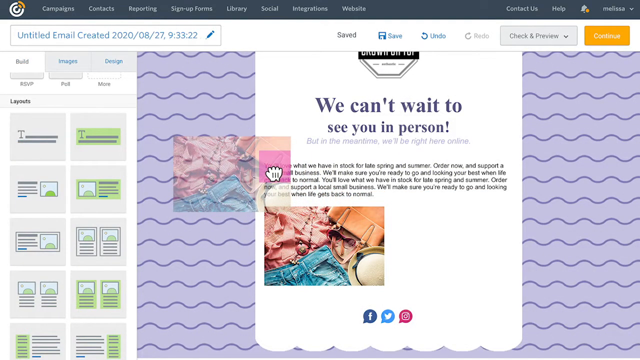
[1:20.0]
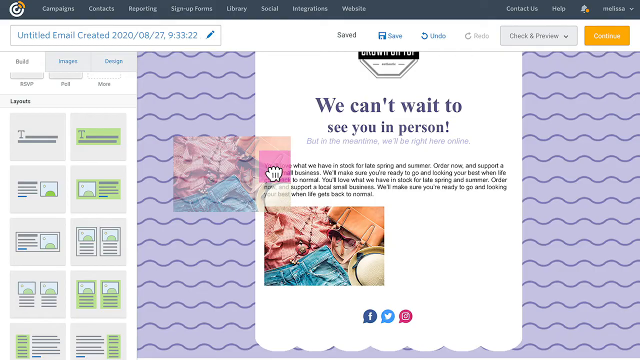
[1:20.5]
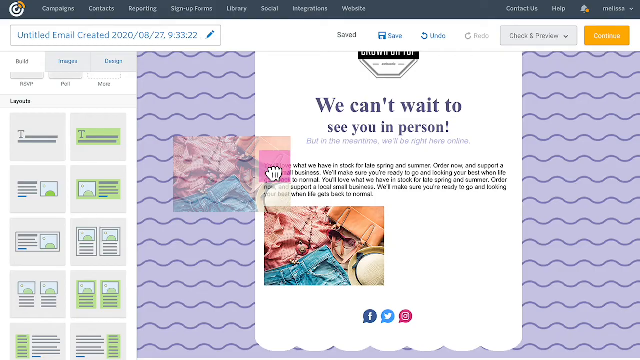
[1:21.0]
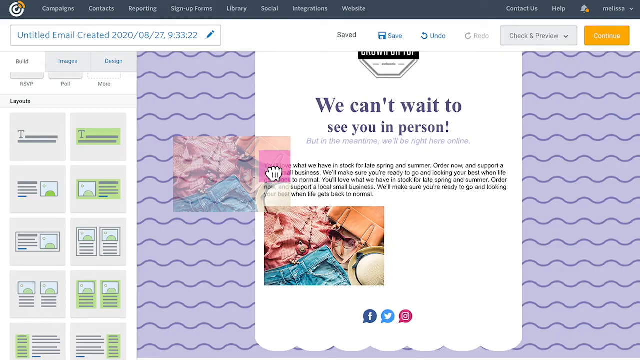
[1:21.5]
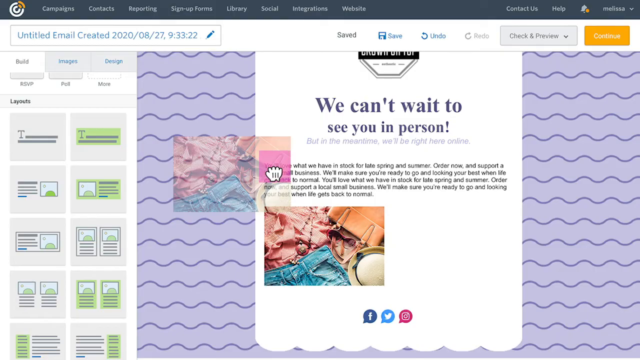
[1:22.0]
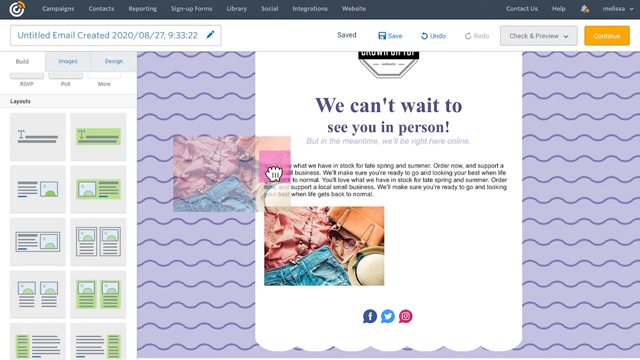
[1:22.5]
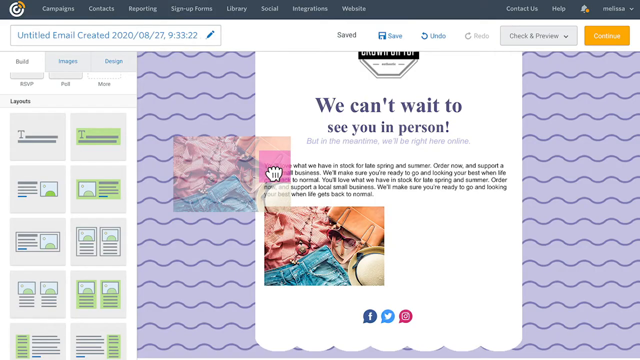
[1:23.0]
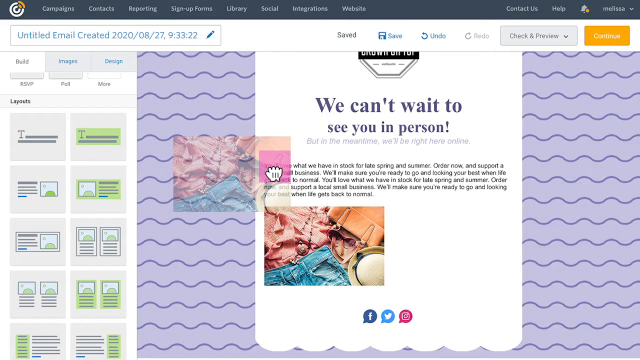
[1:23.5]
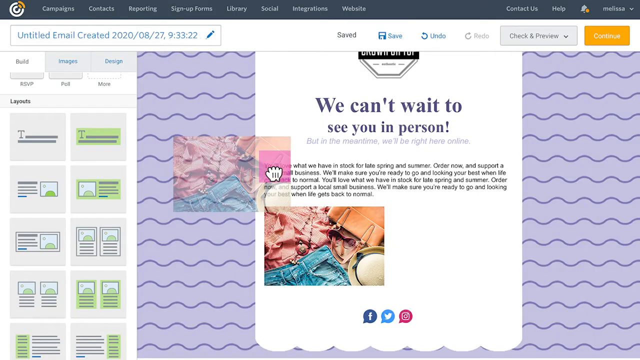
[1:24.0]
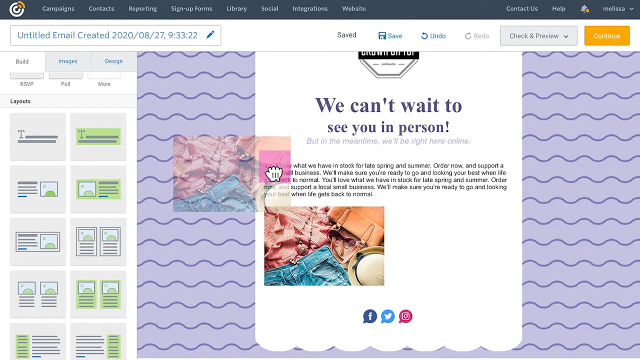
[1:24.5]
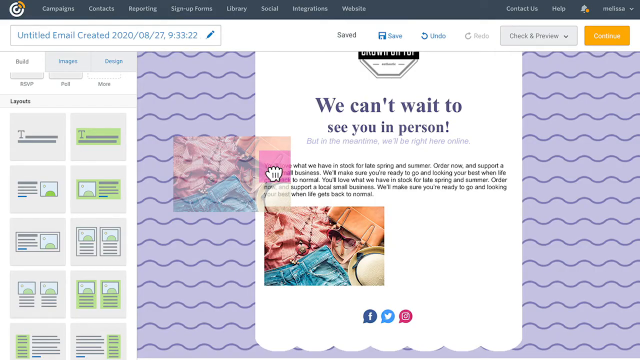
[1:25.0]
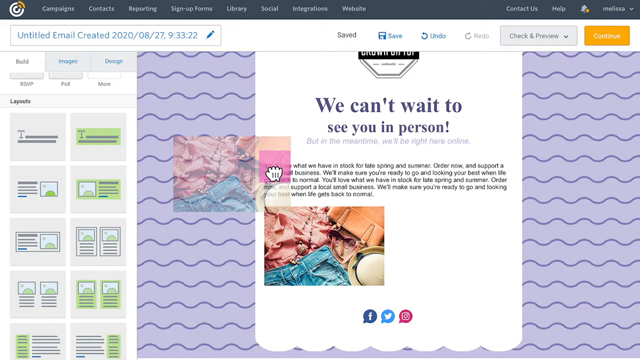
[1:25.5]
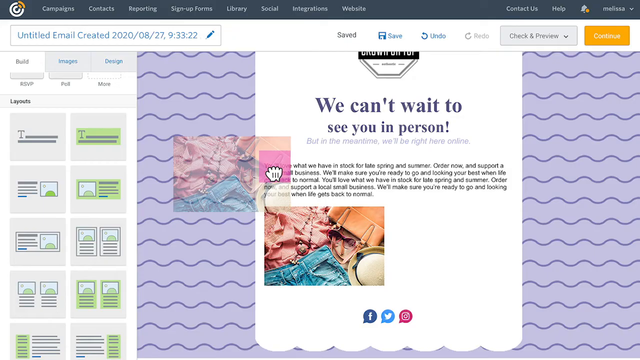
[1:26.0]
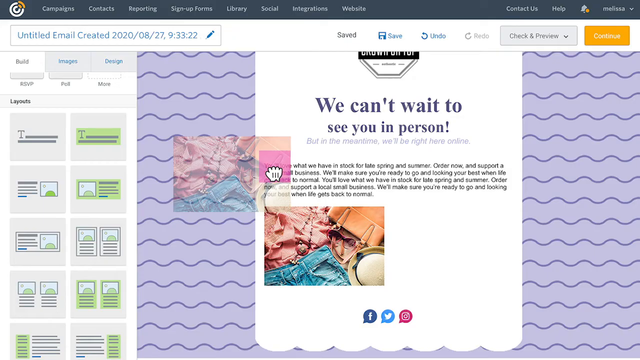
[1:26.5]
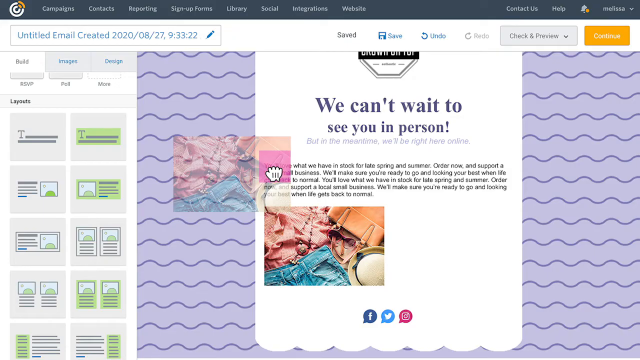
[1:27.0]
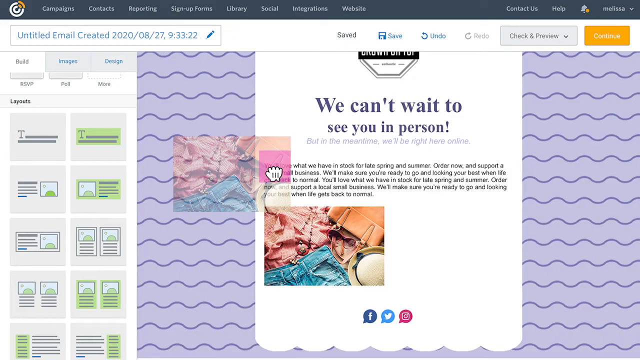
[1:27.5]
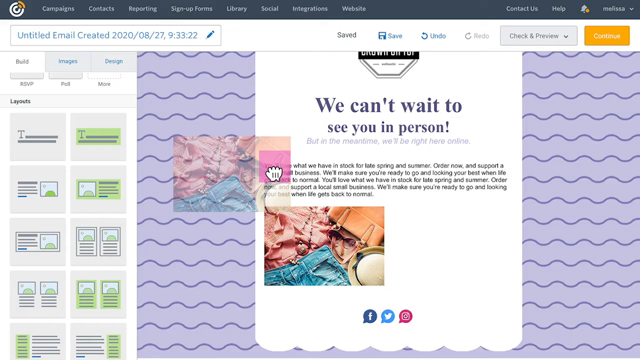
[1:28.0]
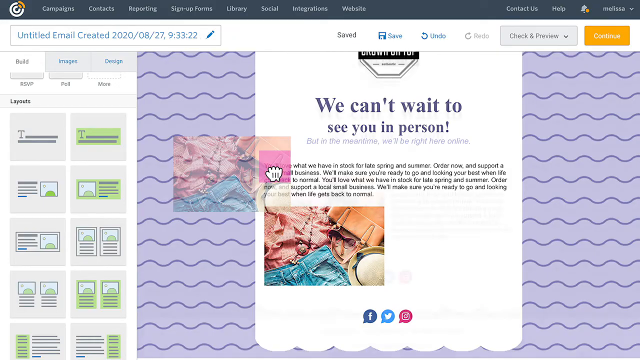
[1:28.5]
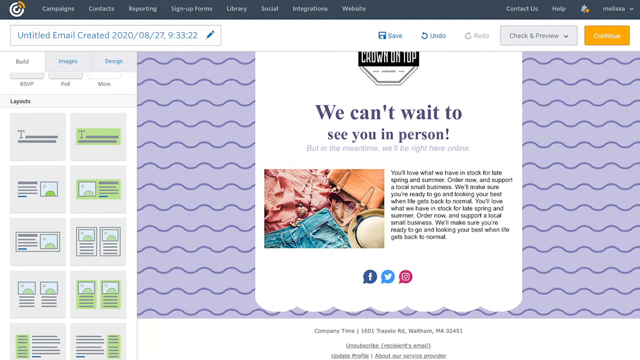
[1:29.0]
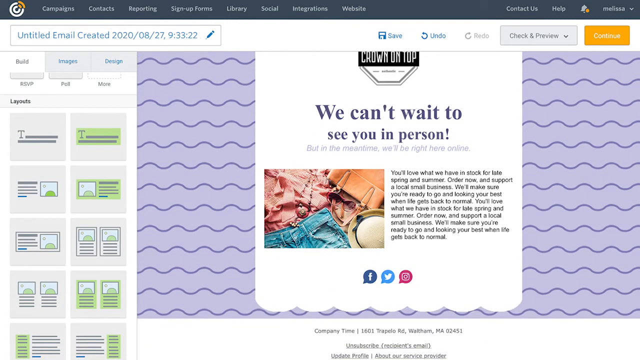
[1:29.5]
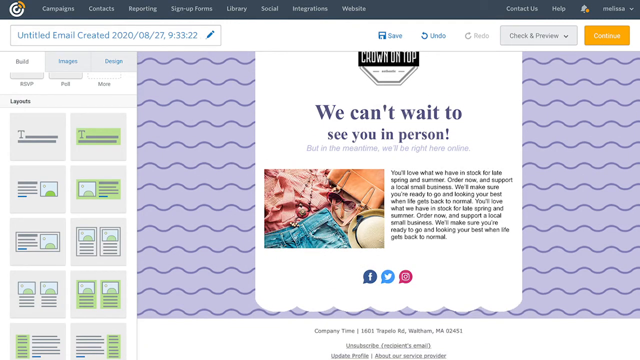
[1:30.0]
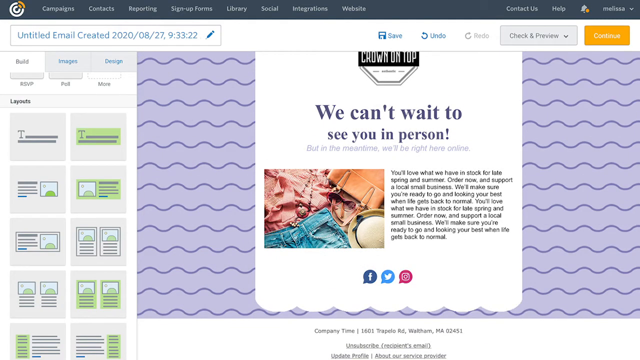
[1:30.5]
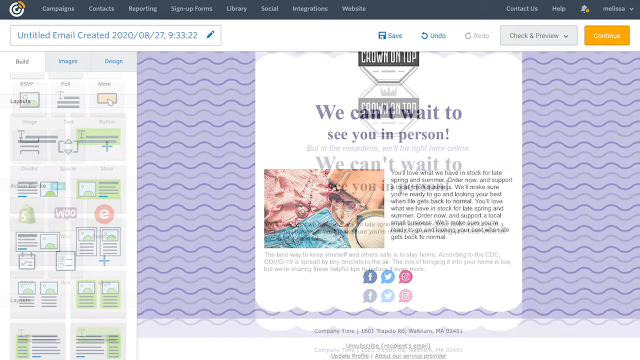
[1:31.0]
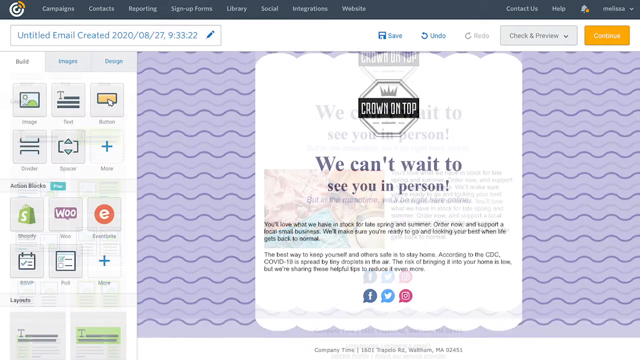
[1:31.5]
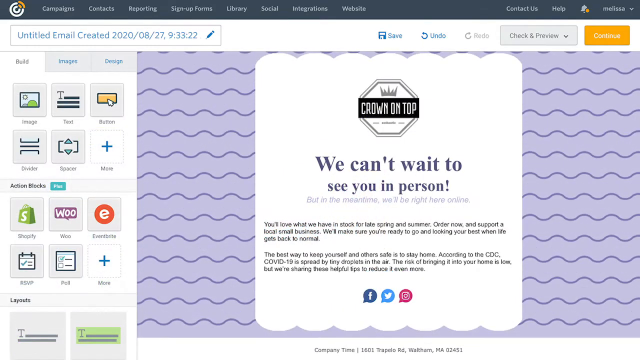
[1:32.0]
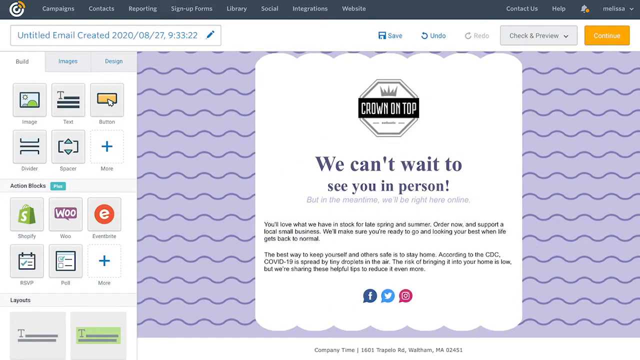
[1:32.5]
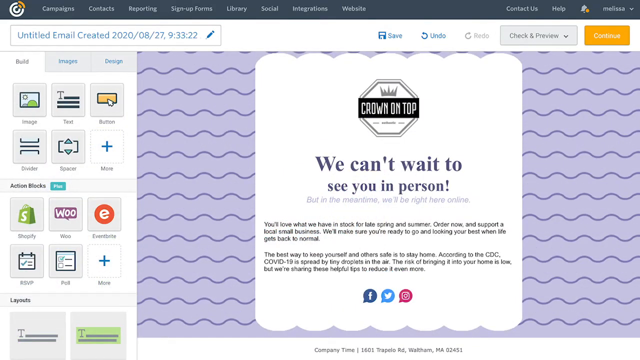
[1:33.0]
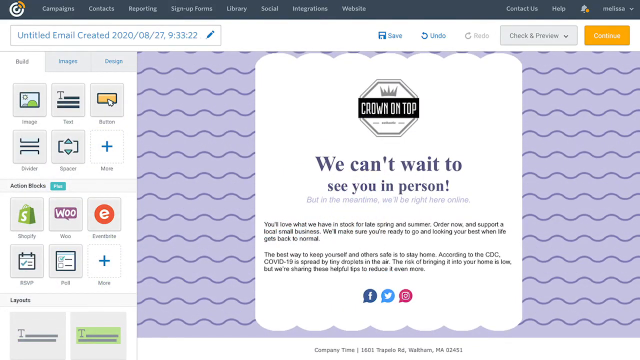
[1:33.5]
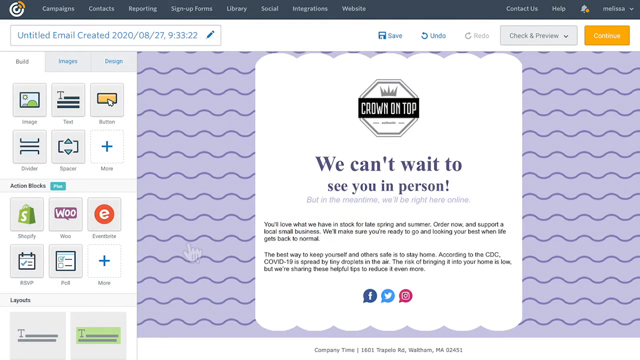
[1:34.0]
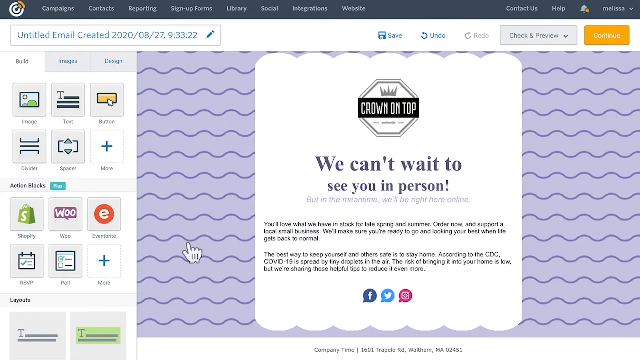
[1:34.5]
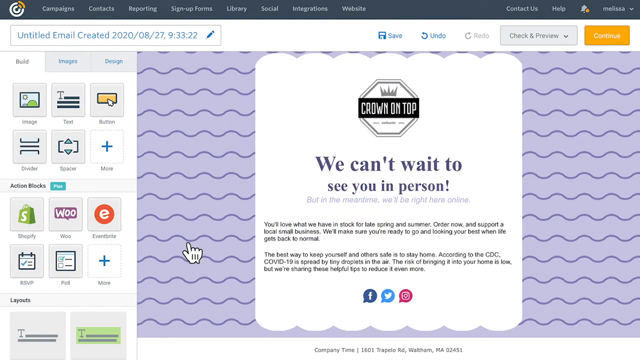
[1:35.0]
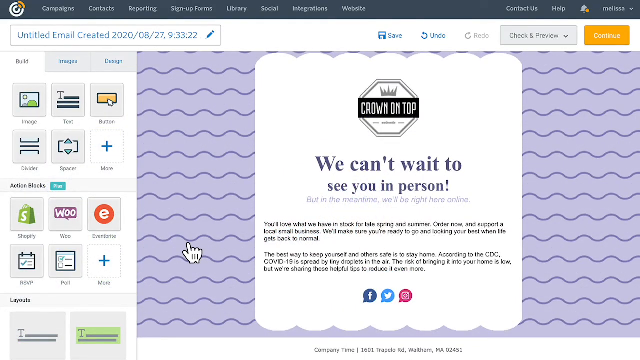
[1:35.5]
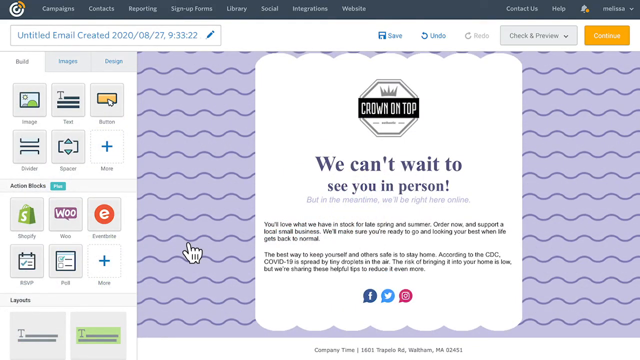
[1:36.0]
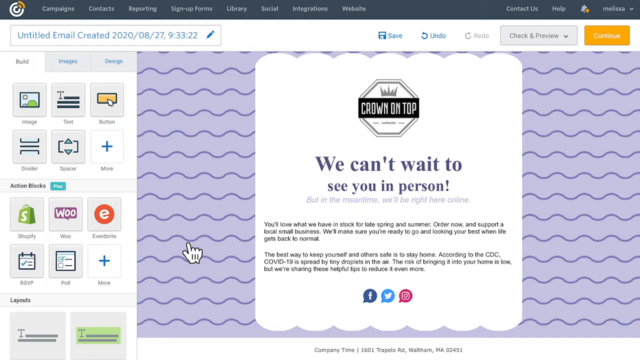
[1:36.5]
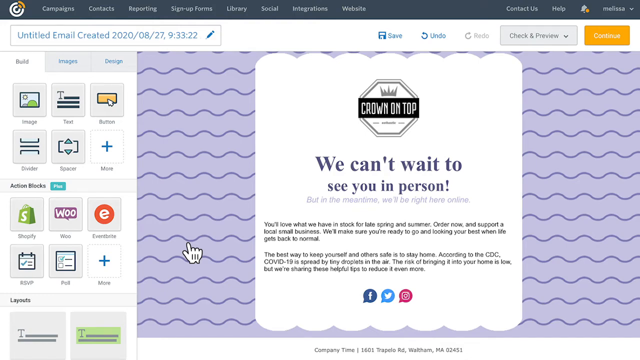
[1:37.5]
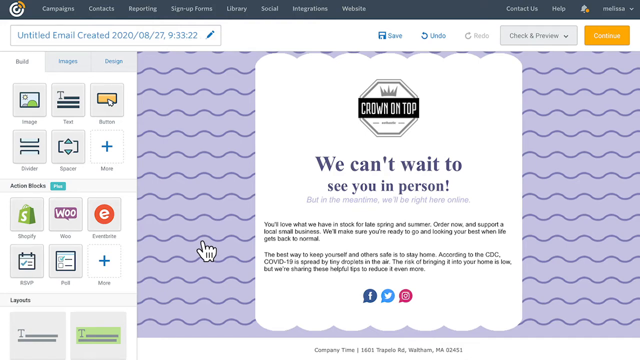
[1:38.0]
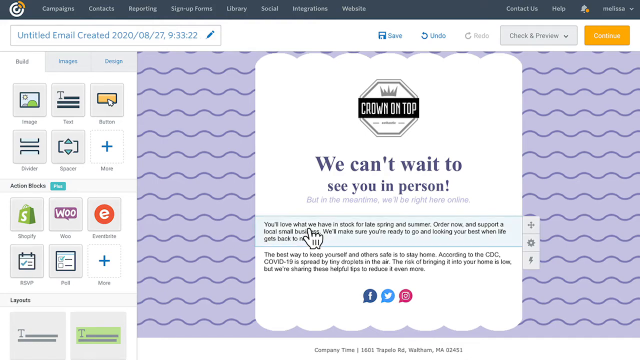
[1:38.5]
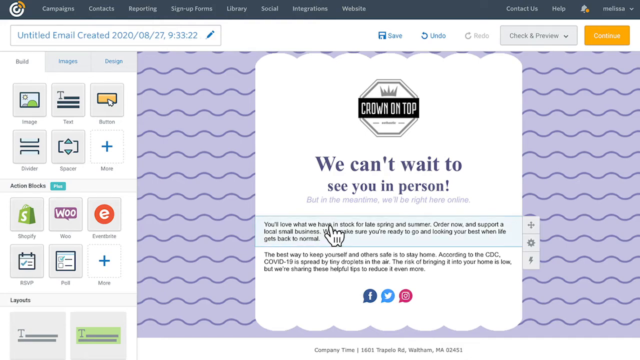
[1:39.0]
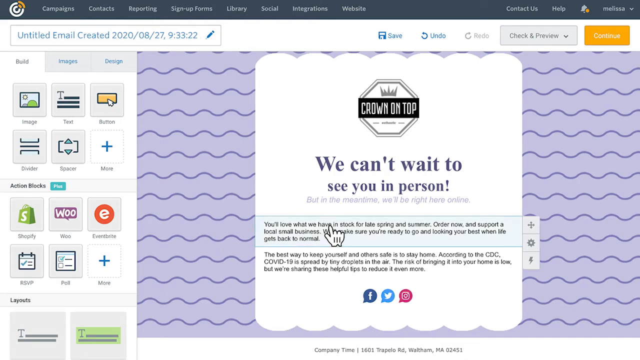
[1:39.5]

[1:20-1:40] A photo is dragged to just left of some copy, with a bright fuchsia box showing where it will go. When it is released, the picture moves into place and the text also moves to make room for it. A version of the email without any images then appears. Hovering over a text box highlights it in light blue; with the cursor over the text, options appear on the right-hand side: a plus button, a gear icon and a lightning bolt icon. The text is the same copy as before.